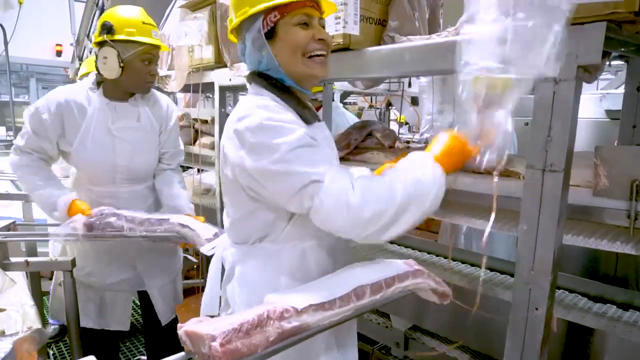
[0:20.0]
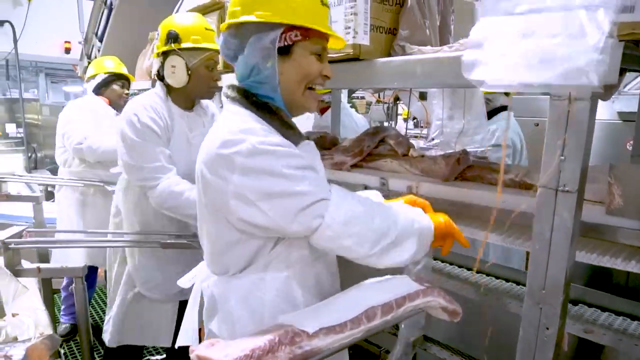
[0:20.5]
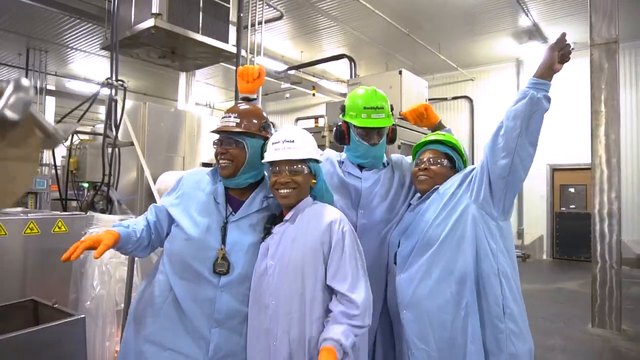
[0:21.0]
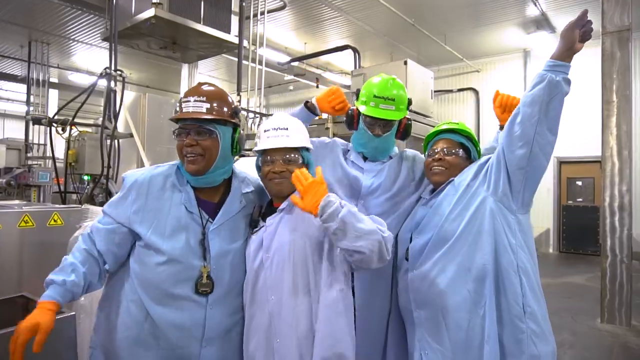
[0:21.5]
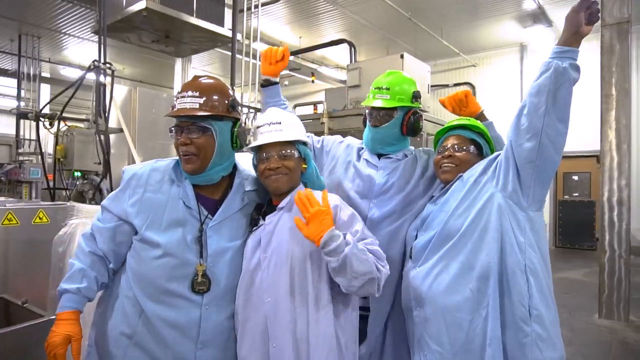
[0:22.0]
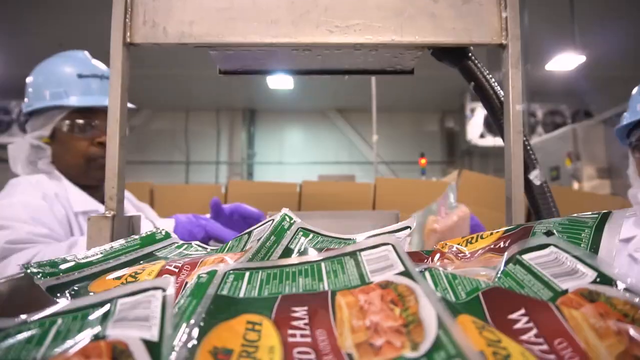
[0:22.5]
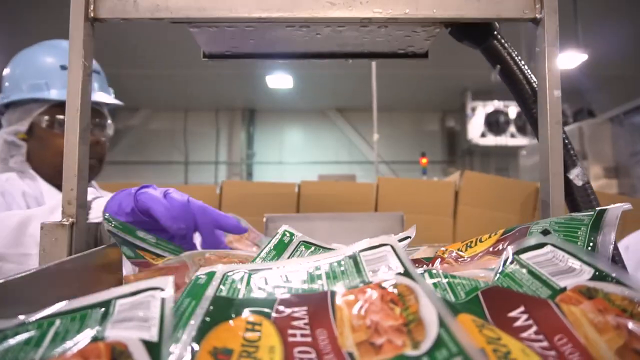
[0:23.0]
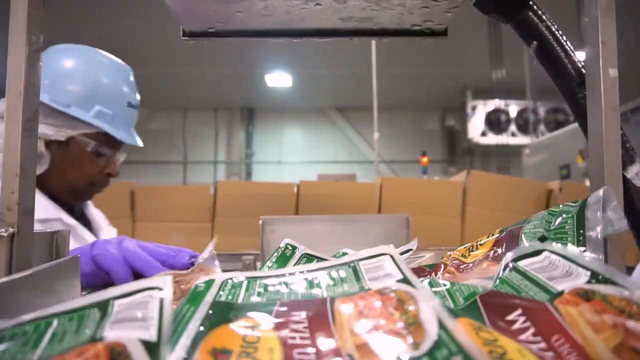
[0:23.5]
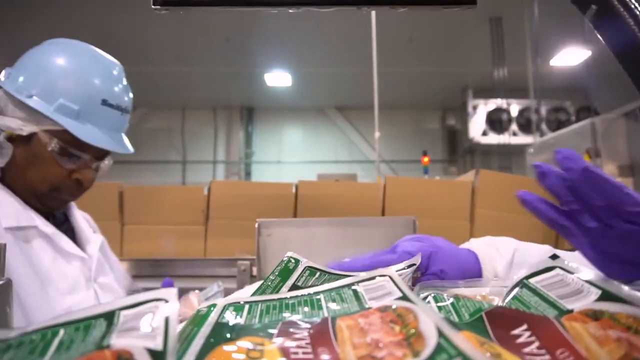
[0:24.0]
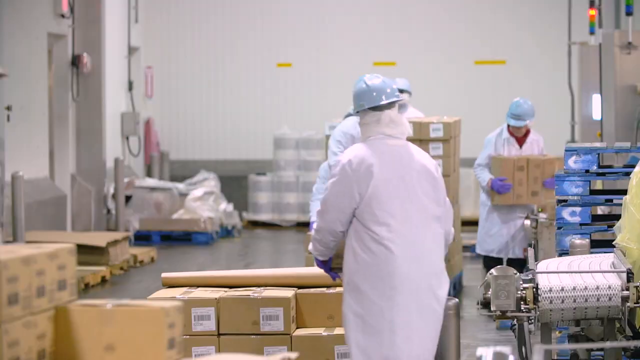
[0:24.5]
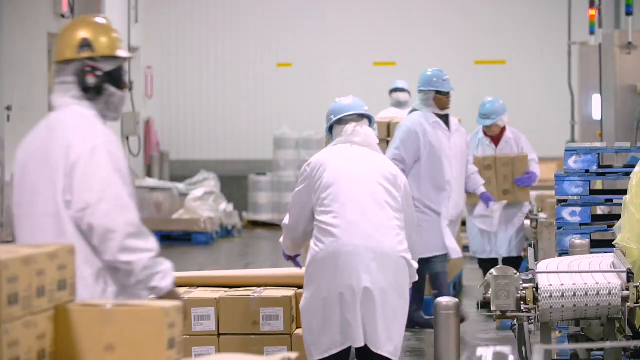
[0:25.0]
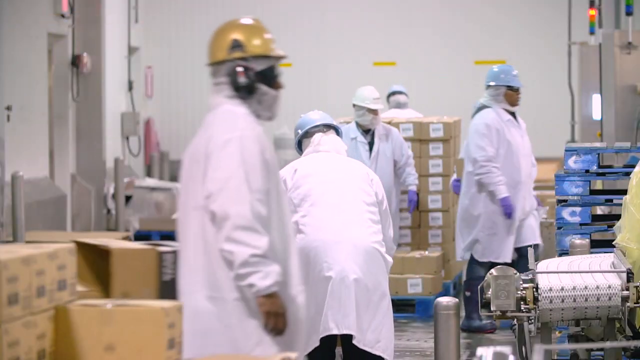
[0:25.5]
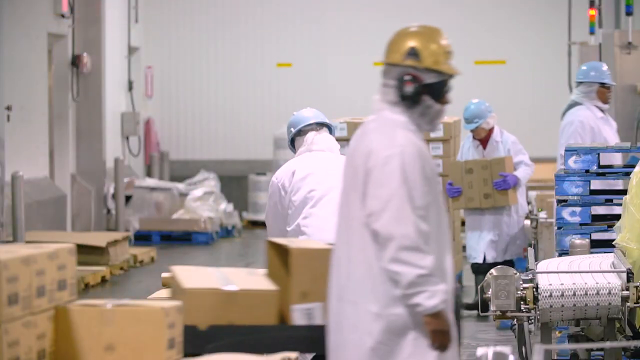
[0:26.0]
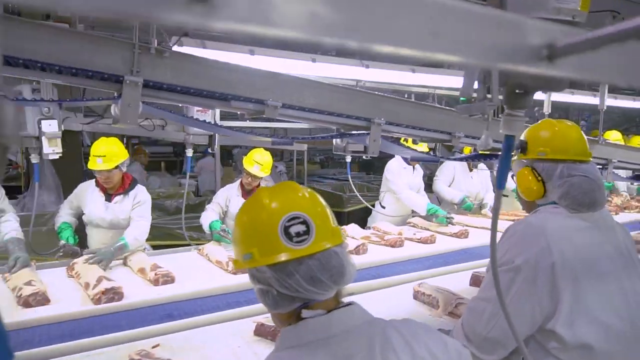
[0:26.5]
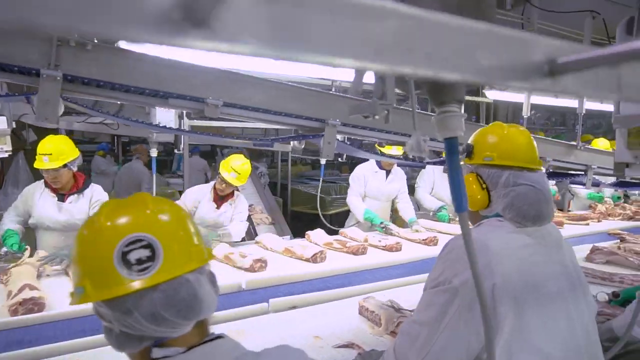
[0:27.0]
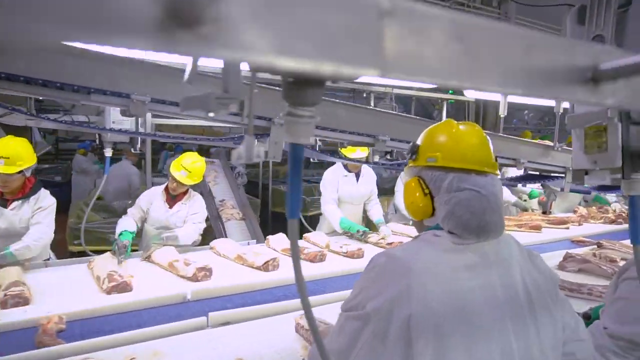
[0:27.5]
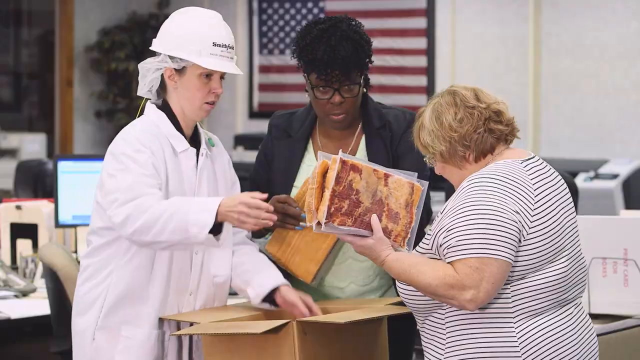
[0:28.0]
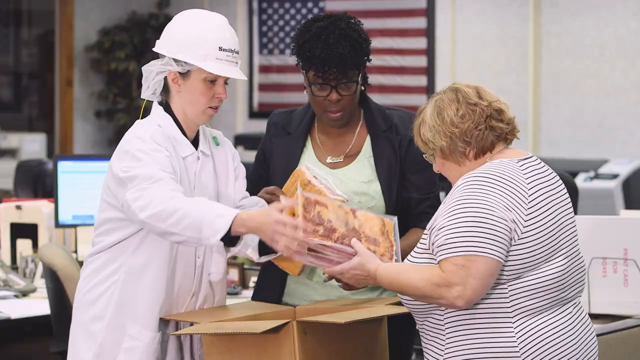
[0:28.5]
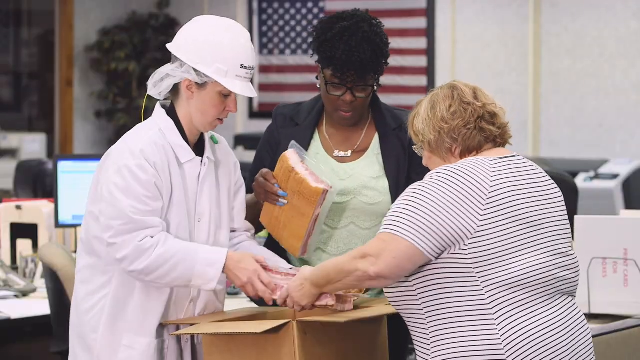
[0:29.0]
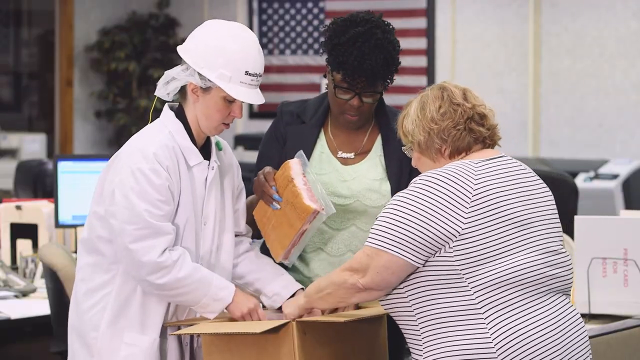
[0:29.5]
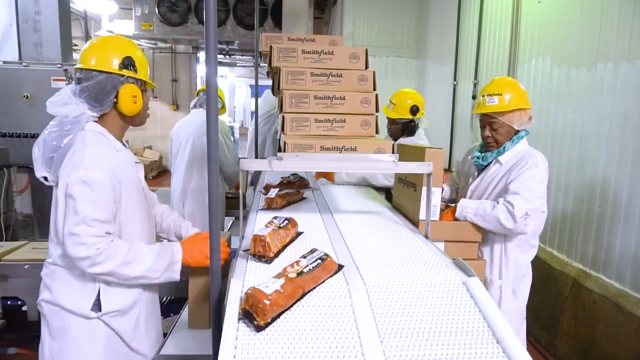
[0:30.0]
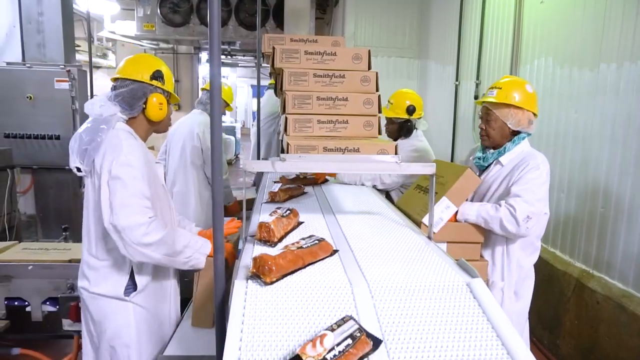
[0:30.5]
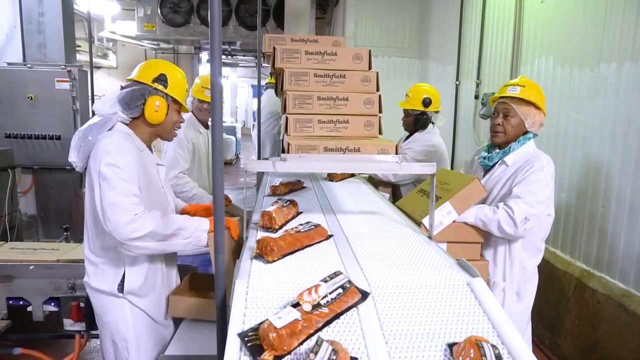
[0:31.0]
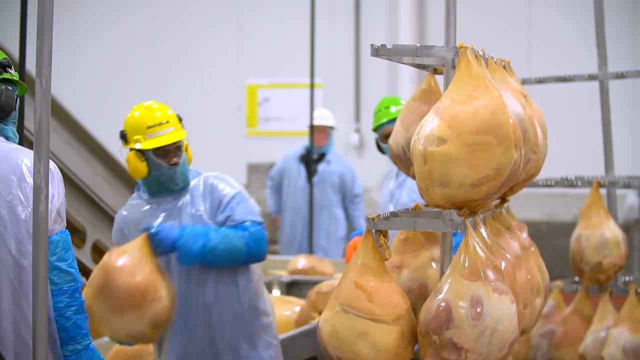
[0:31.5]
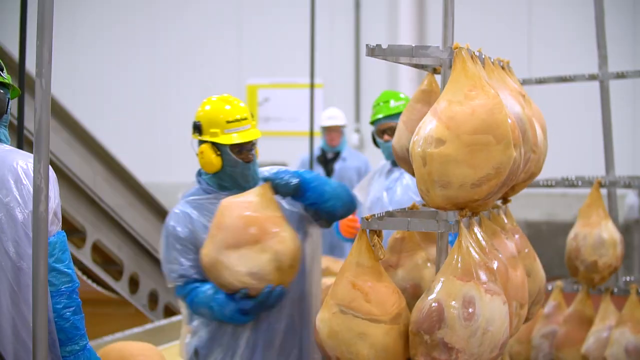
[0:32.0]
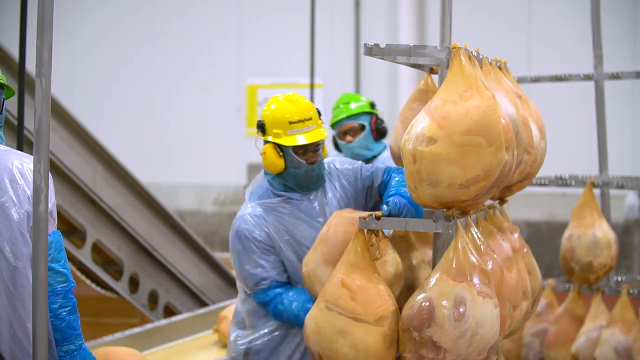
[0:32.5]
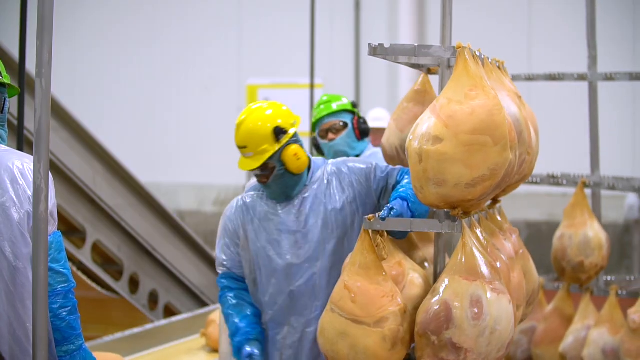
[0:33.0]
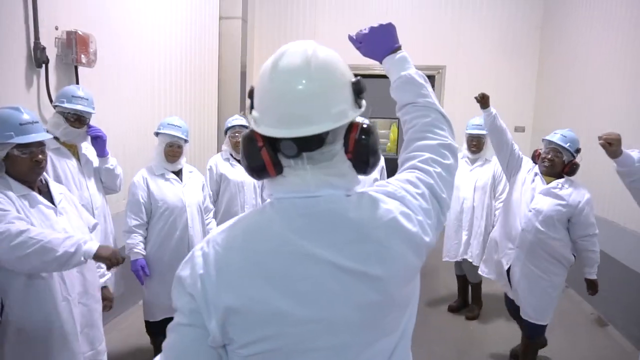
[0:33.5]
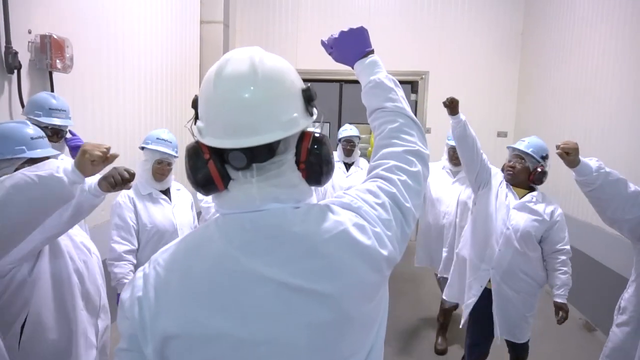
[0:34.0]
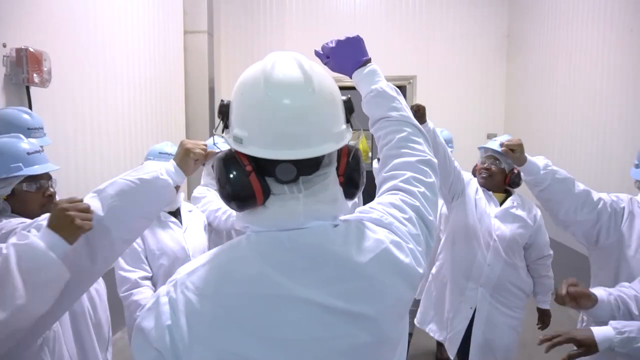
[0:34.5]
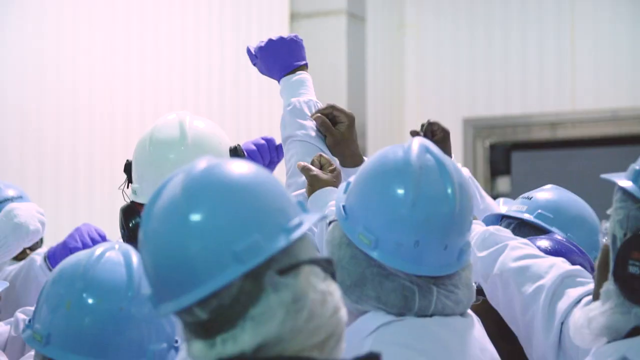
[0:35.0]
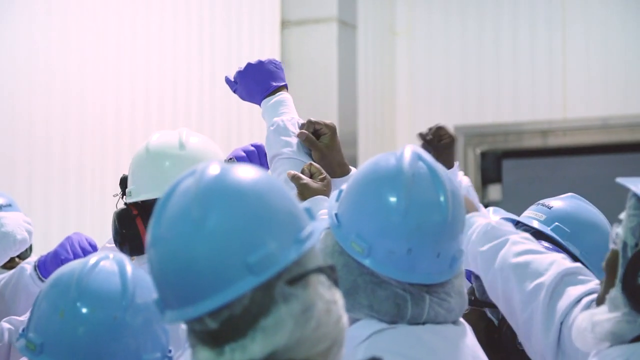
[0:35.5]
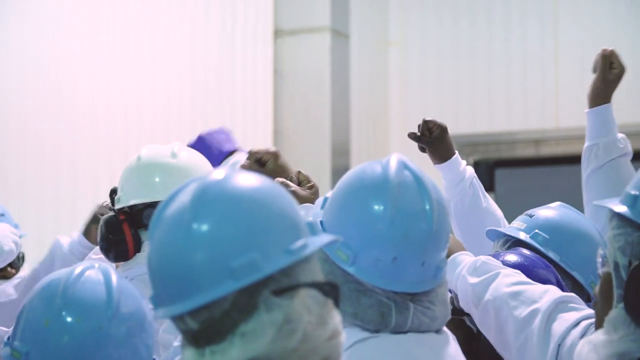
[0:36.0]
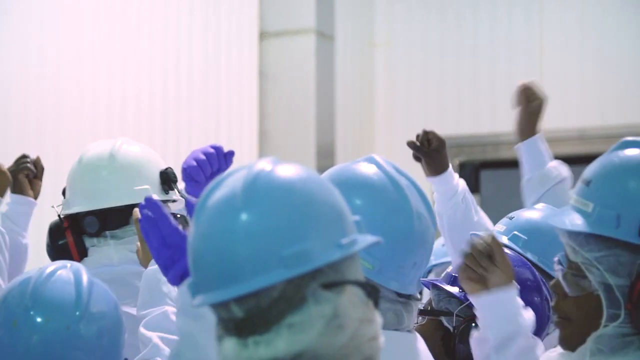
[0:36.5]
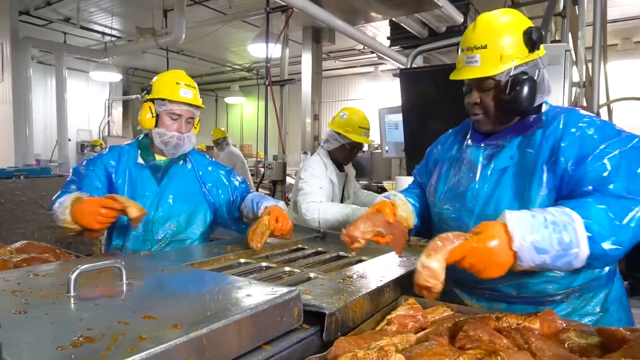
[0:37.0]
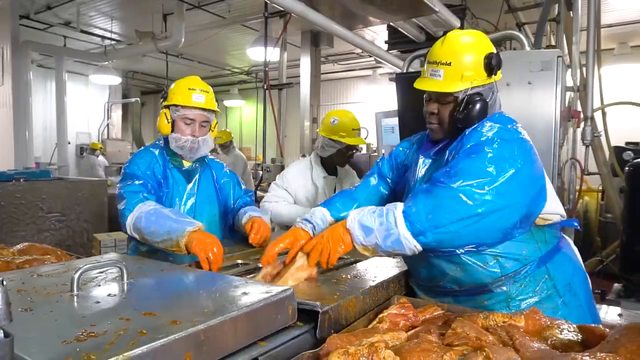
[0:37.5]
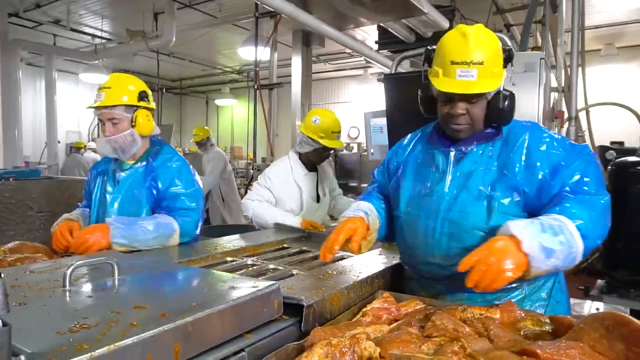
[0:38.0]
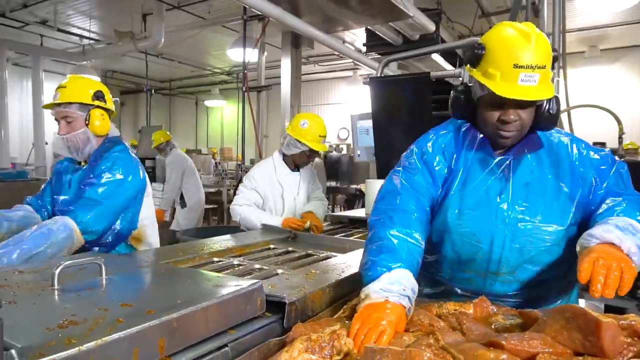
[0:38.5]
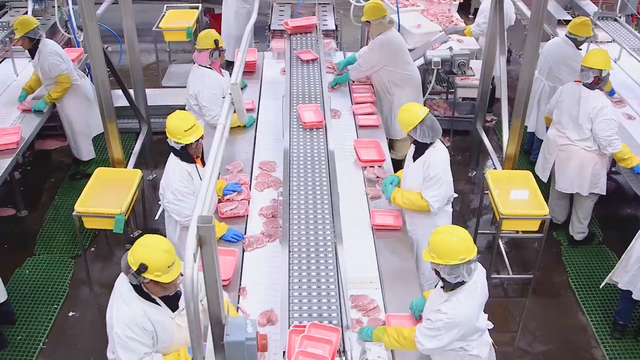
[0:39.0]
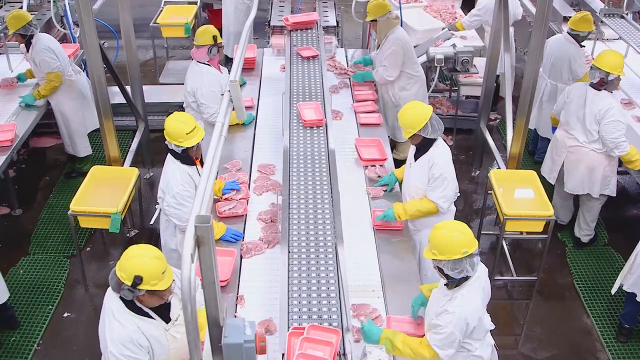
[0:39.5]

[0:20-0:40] People wearing overall cloaks and hard hats appear in different shots. They all wear gloves except one woman on the right-hand side. They smile and joke with each other, put their hands in the air and wave at the camera. Food that looks like ham, judging by the packaging, goes down the conveyor belt, and a person picks items off at either end. There is a lot of movement in the warehouse, with multiple people picking up boxes from various pallets, and at another conveyor belt many people pick things off the belts as they go past. One person in a cloak and two others in normal clothes look at the contents of a bag. More work goes on inside the warehouse, and everybody comes together at the end with their hands in the air. A lot of food goes down the conveyor belt, and the people pull it off the belt and put it into boxes alongside them.